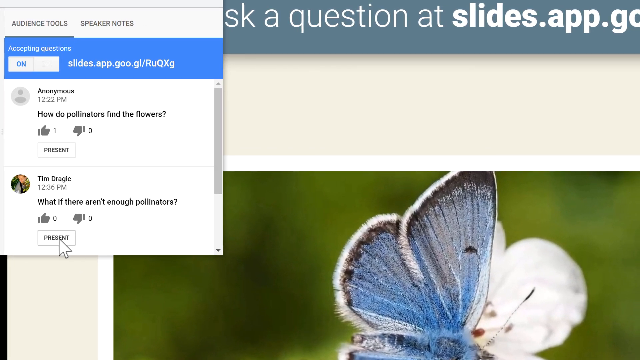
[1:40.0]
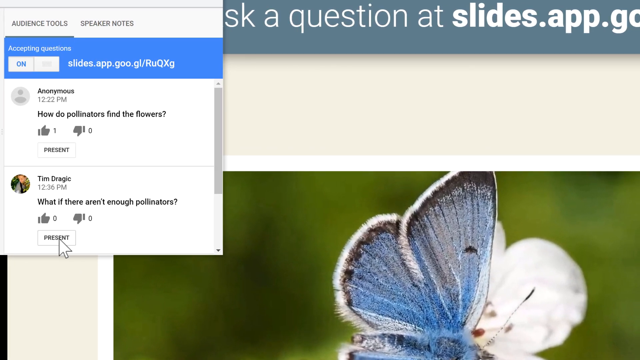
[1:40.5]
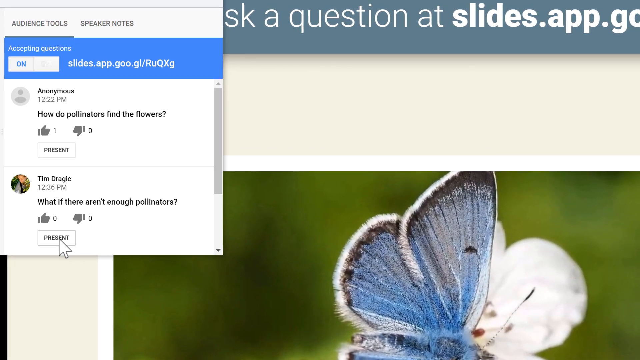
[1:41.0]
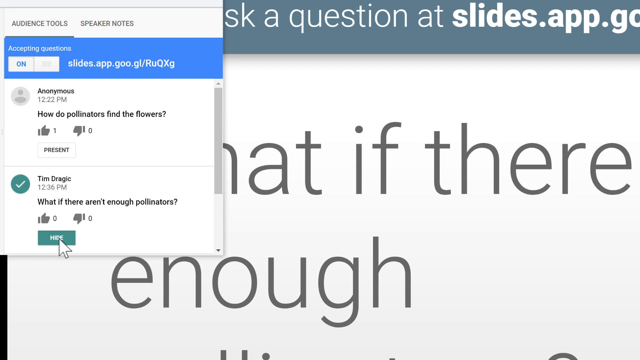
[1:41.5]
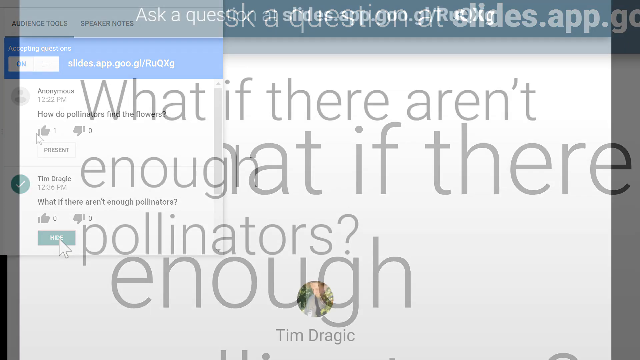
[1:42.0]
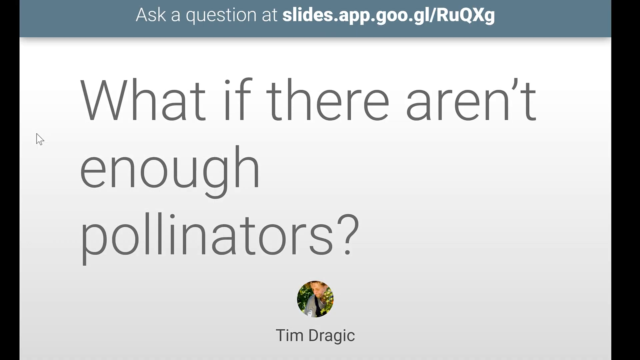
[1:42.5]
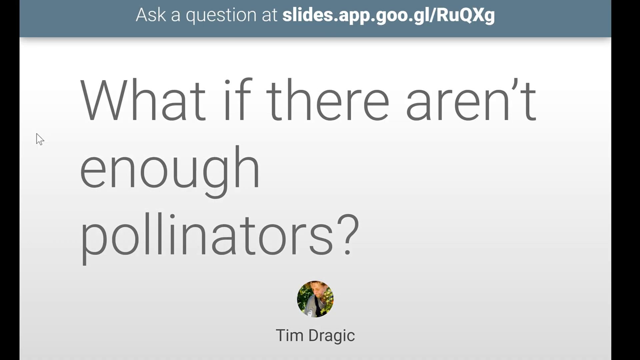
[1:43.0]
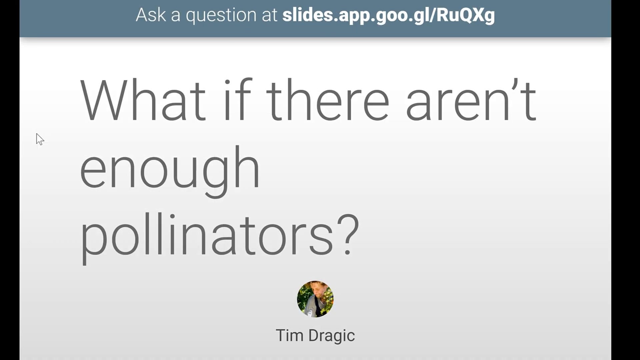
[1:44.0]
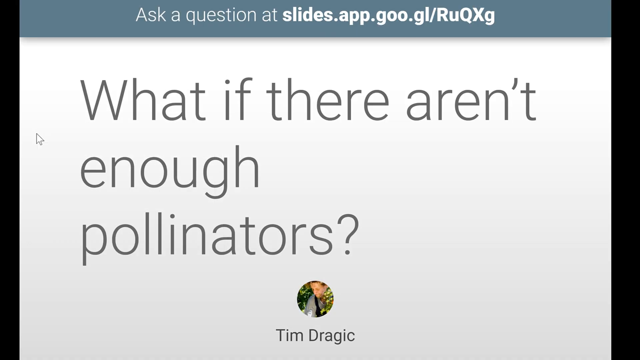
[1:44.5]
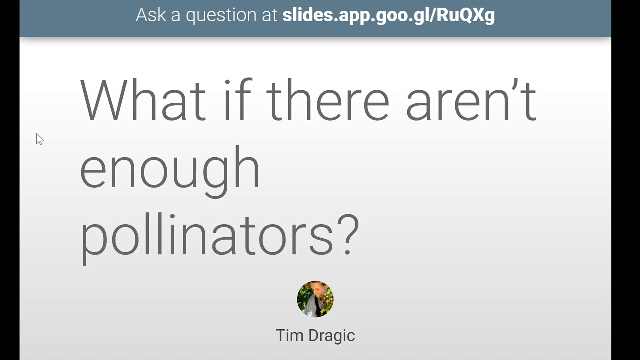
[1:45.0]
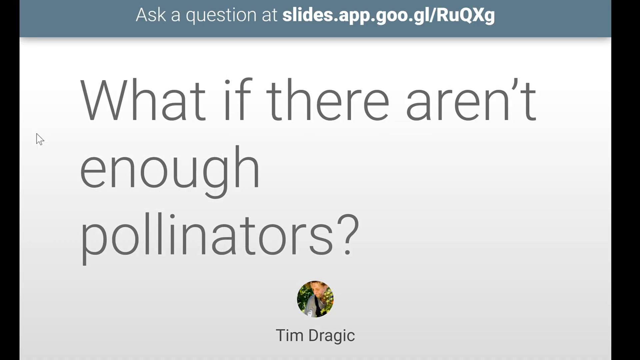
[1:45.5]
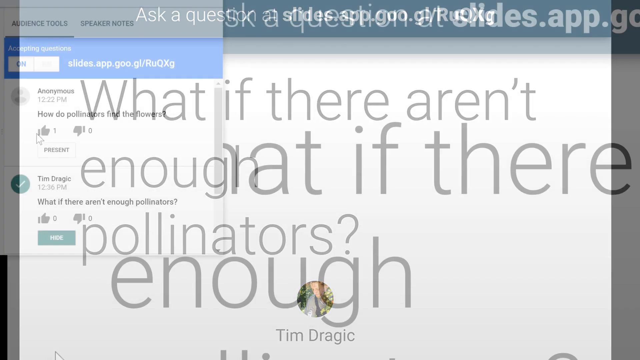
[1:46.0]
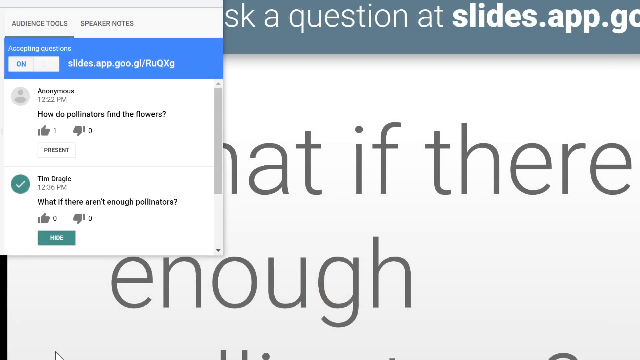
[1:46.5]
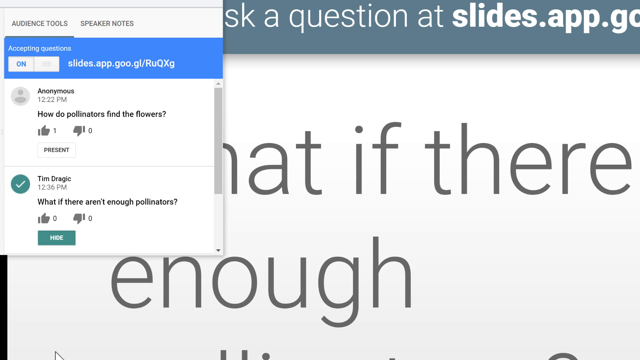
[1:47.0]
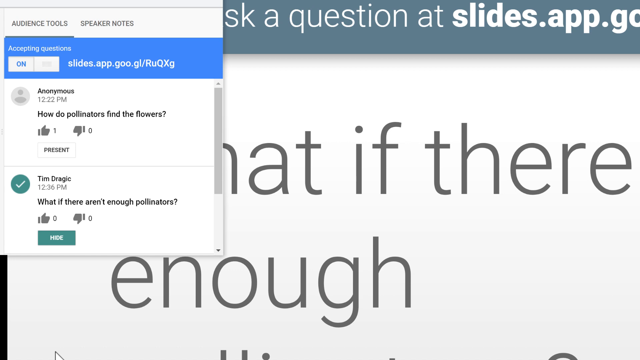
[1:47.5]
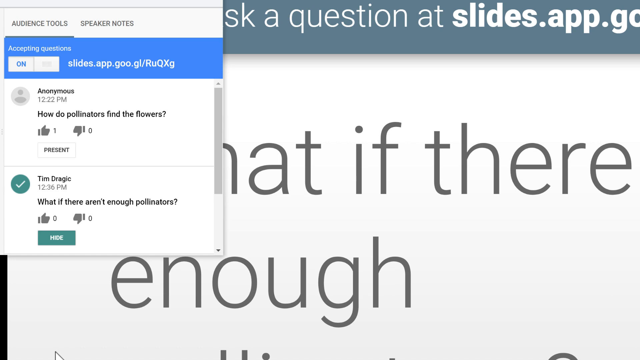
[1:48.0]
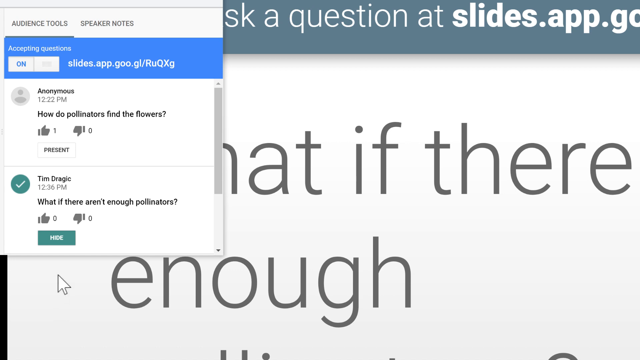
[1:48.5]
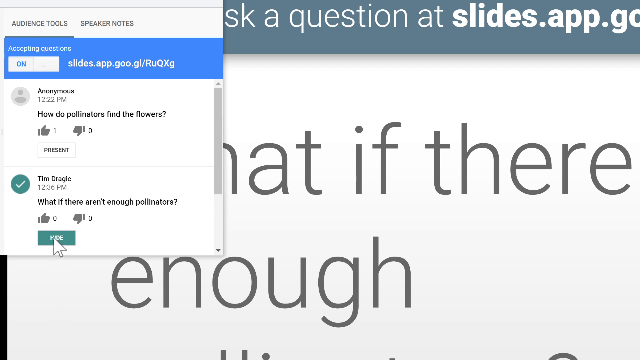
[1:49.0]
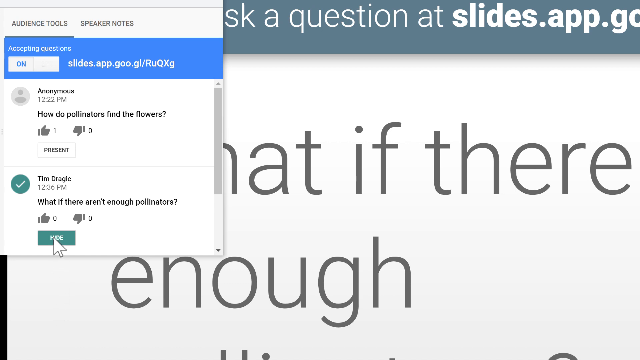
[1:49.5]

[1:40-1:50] A presentation slide is shown with a dialog box open in its top left. Audience tool is selected, and two questions posted by users are shown, one anonymous and one by Tim Dragic. Below the questions are like and dislike symbols, and below those is a 'present' button. The present button is clicked, a tick image appears in place of the profile picture near the name, and the present button changes into a hide button. The background, which had shown the butterfly image, changes to present the question full screen. The dialog box is then shown again and the hide button is clicked.